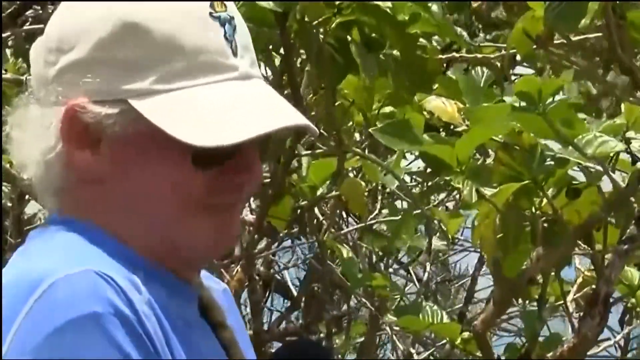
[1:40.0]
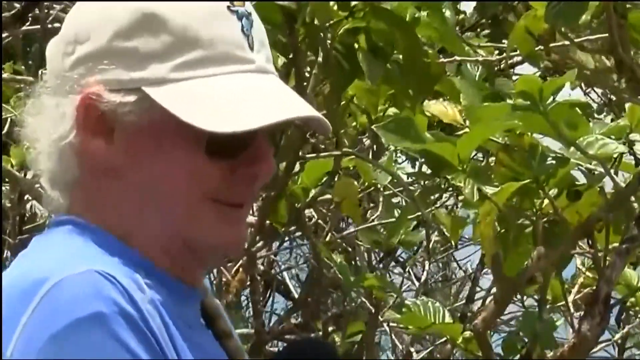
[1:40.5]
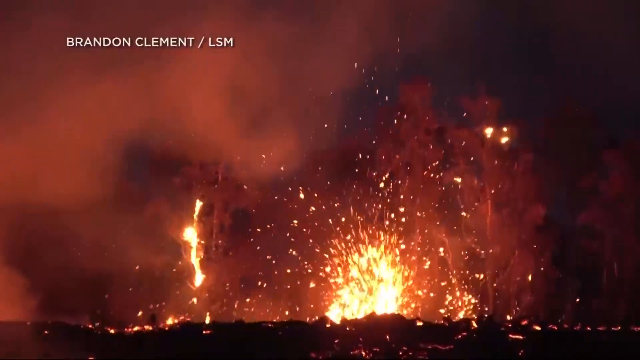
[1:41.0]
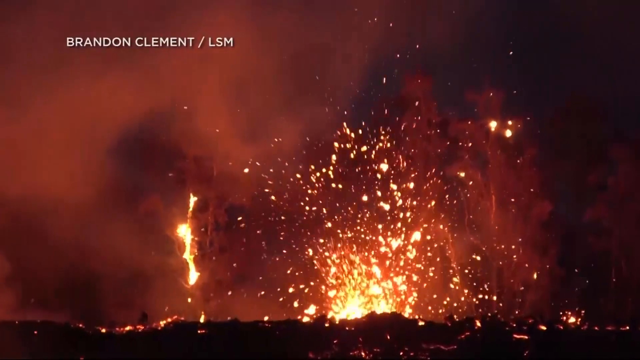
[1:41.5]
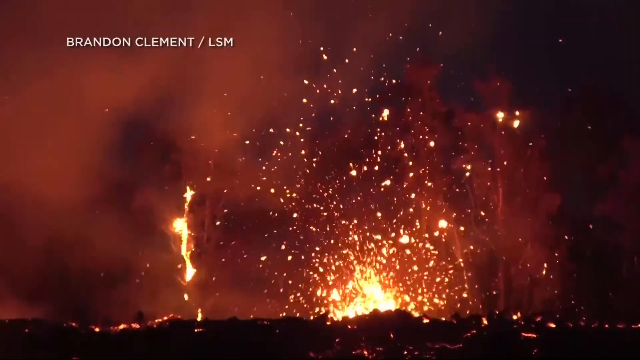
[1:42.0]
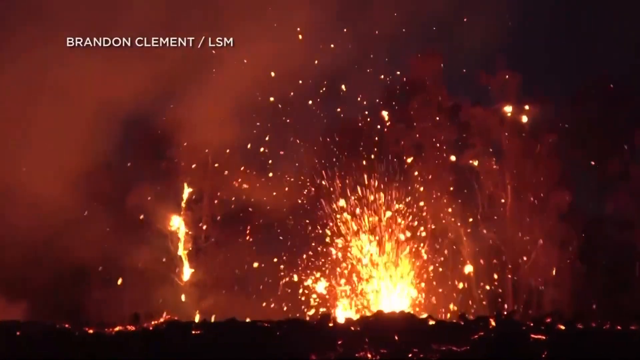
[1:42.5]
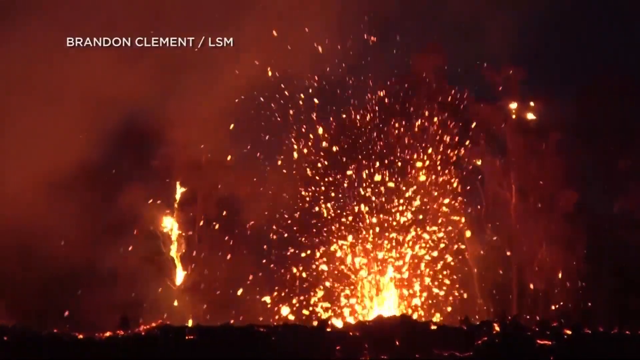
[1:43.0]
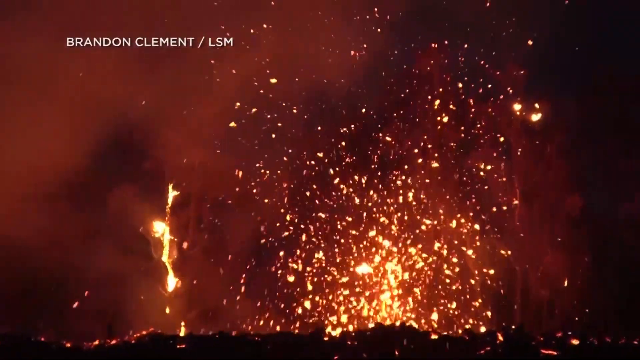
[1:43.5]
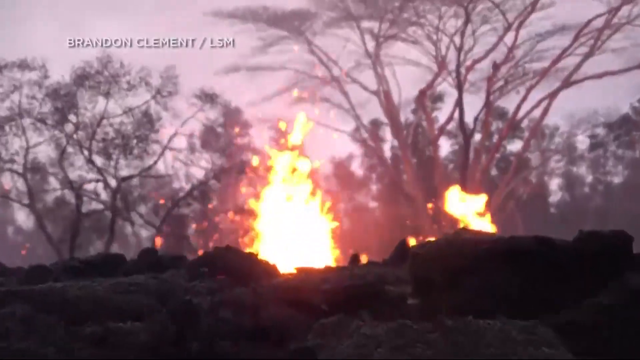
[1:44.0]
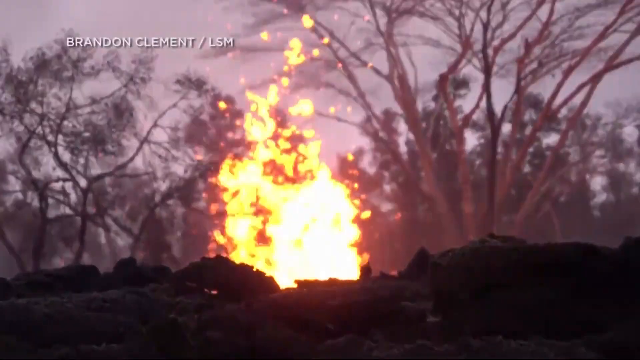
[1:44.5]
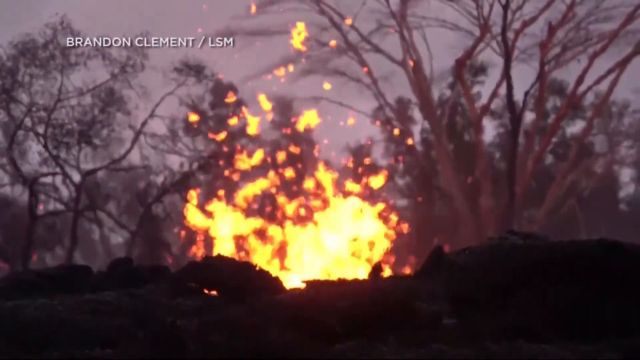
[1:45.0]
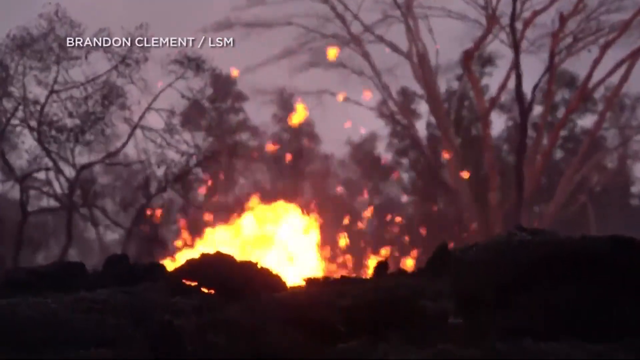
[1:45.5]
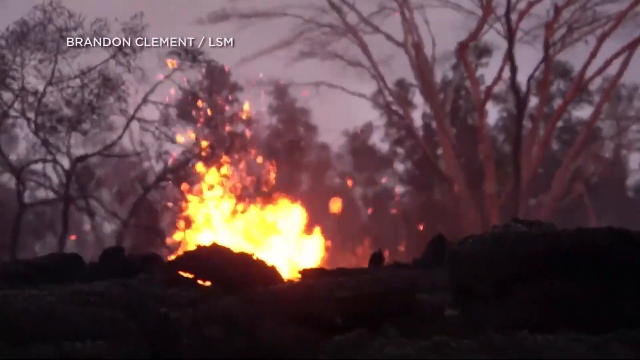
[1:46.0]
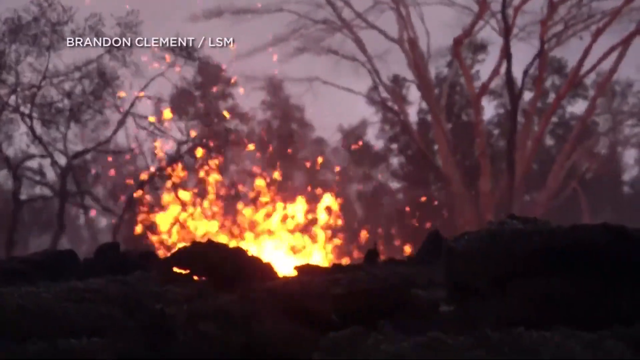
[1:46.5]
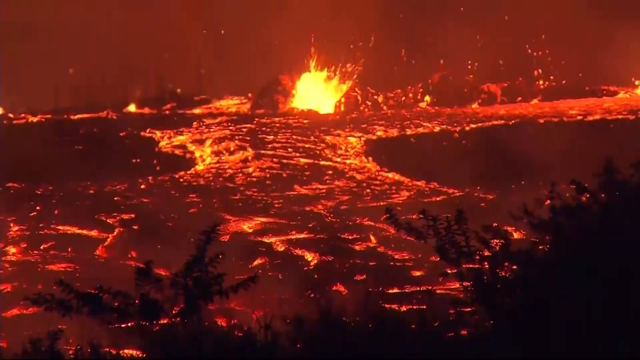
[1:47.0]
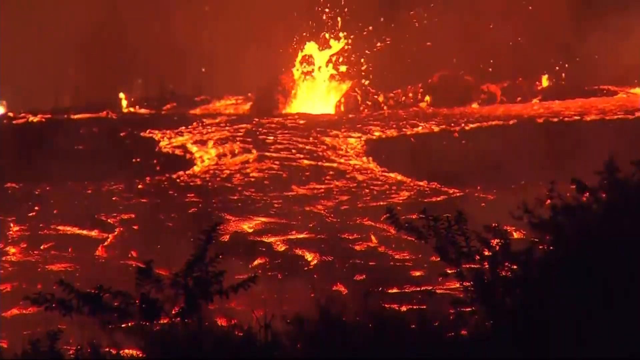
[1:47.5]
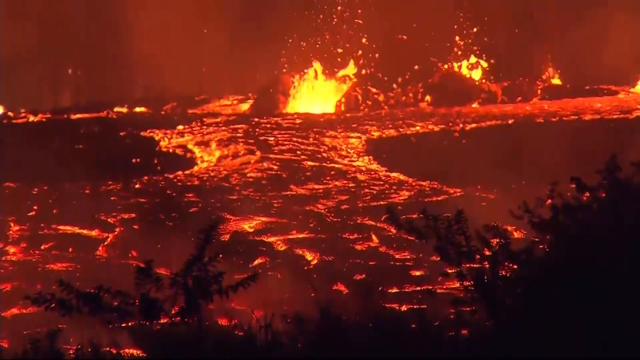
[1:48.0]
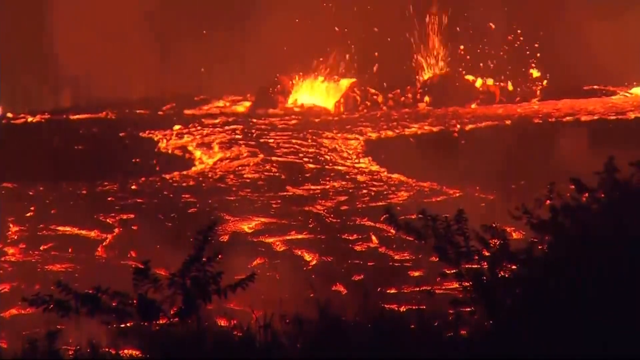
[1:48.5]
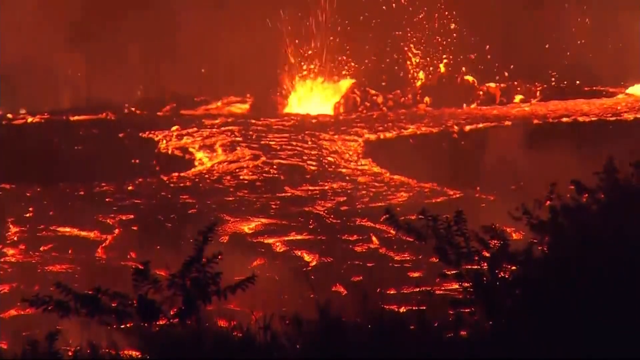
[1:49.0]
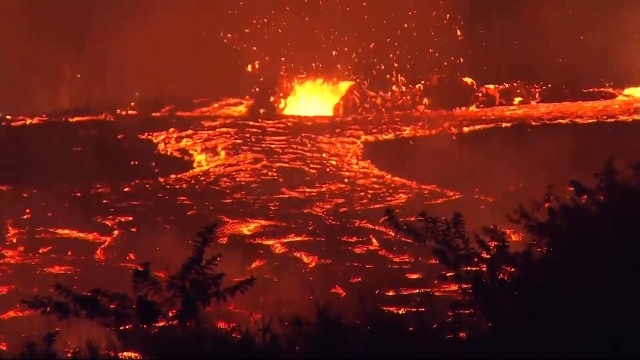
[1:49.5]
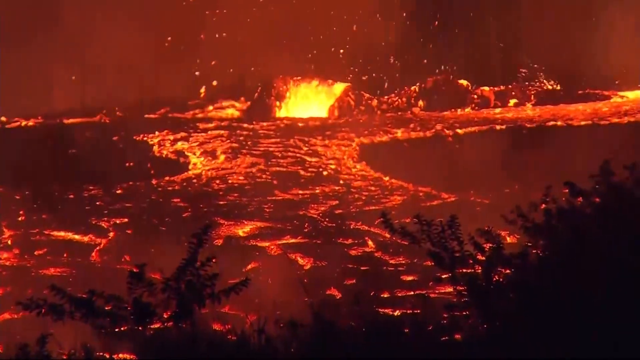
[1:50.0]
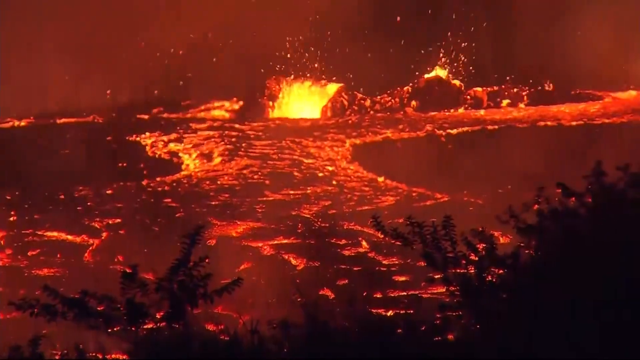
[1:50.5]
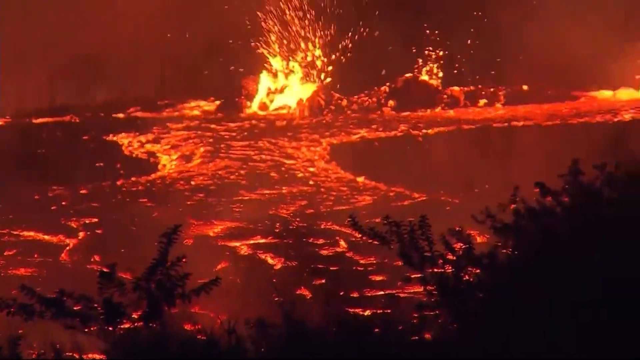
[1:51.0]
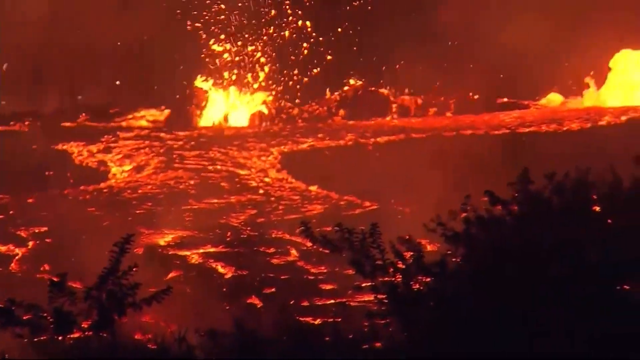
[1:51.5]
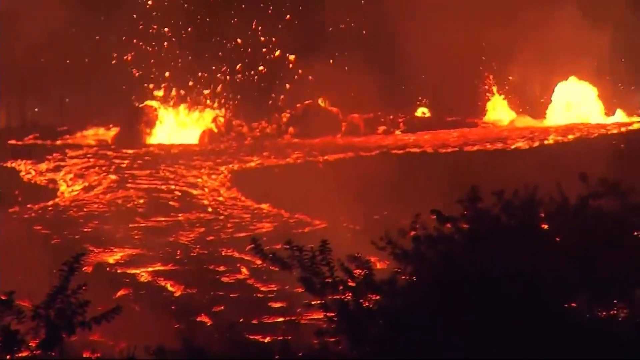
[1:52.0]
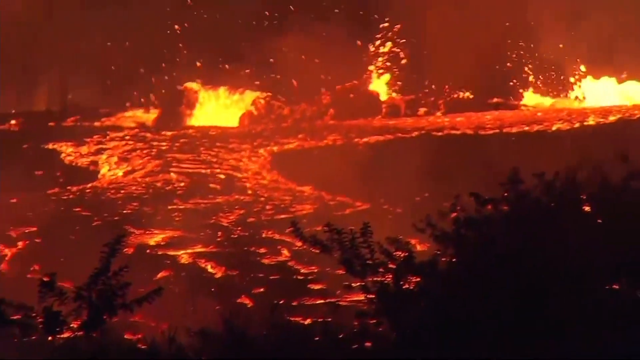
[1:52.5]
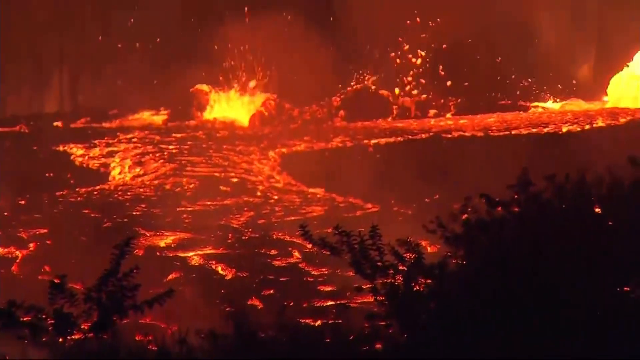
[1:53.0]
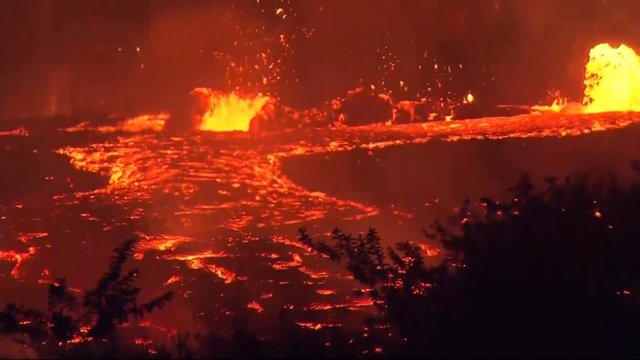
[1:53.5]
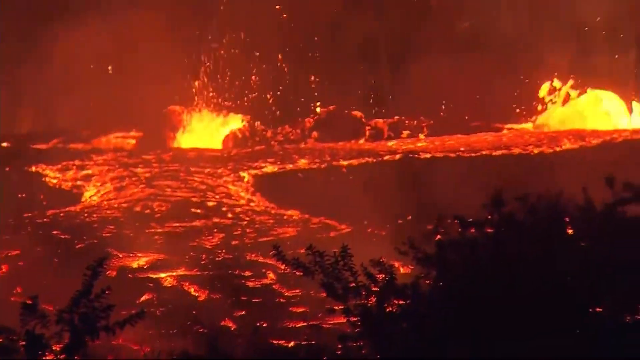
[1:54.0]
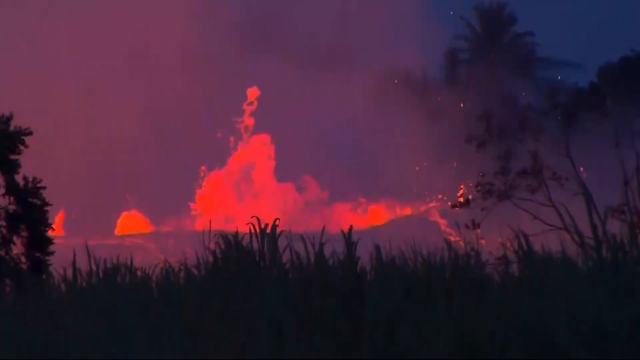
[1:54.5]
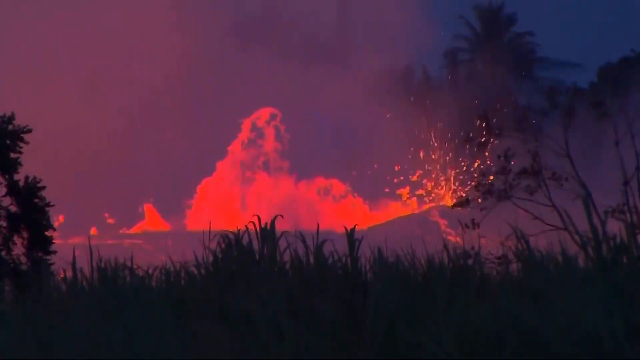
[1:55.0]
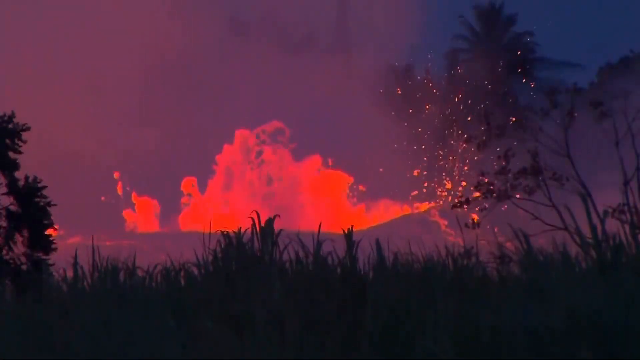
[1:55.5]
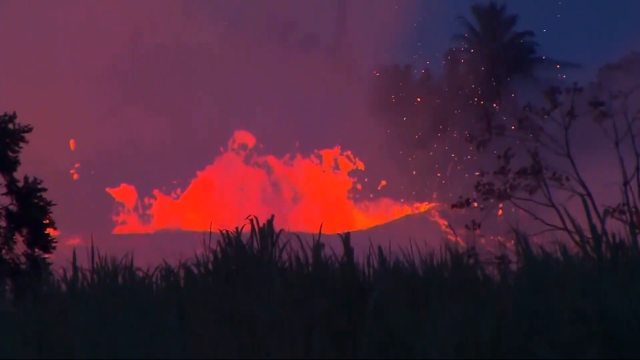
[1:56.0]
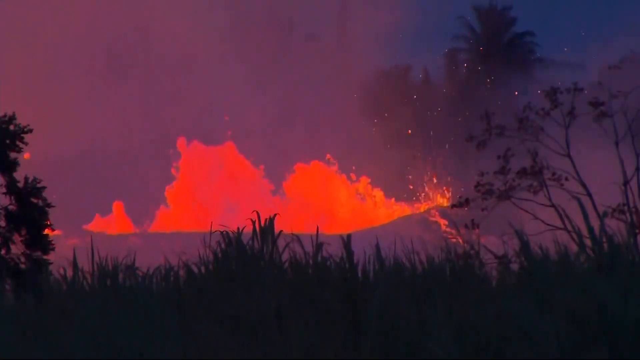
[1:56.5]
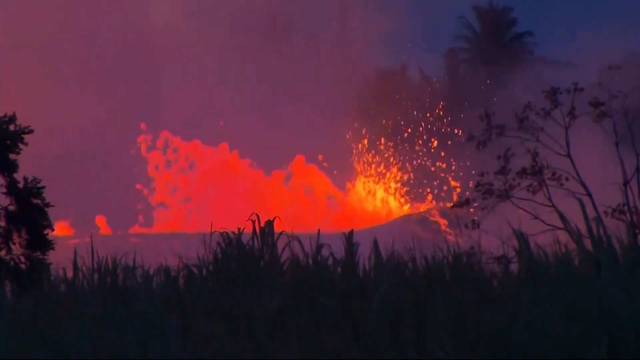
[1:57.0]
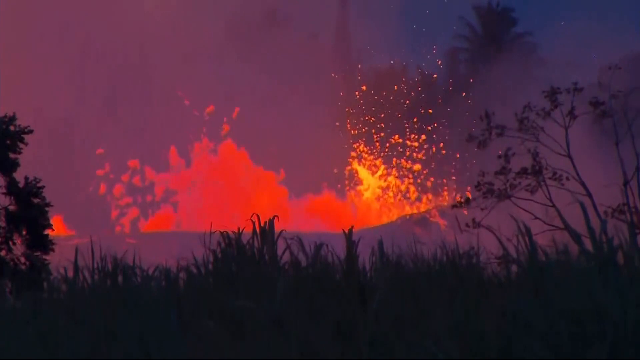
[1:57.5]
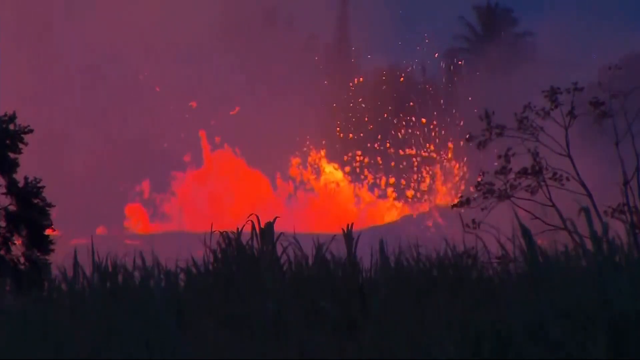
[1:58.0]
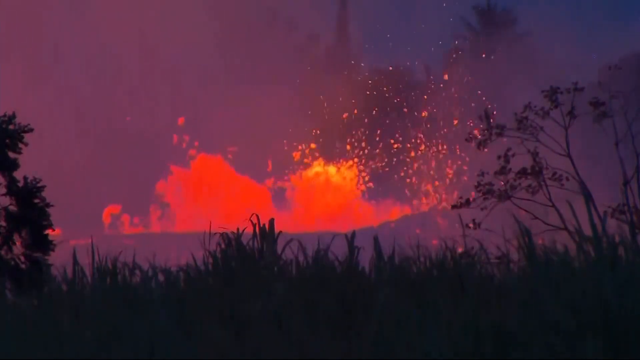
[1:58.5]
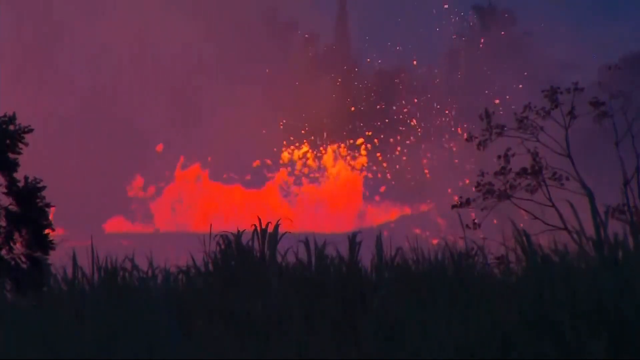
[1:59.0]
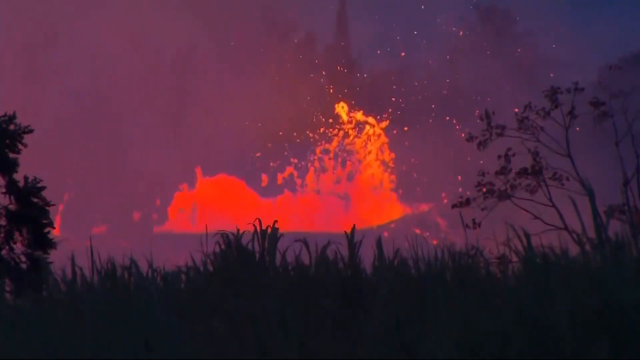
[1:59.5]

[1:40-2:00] An older gentleman appears on the left side of the screen wearing dark-tinted sunglasses and a white baseball cap with a logo that looks almost like a hospital sign, like the symbol with a snake wrapped around it, apparently white and blue. He has white hair and a light blue shirt, faces toward the right of the screen, and stands in front of a tree or bush with green leaves and branches, talking to somebody who does not appear on camera. It quickly cuts to very high-definition footage of a volcanic eruption, probably from a news agency, with text at the top left reading "Brandon Clement / LSM." The lava spews everywhere. It cuts to lower-quality footage where the camera zooms in, then to better-quality footage from very far away showing how much lava is everywhere; even the sky looks red, and the trees in the foreground look black. It then fades out to more footage of a bubbling eruption, with trees and smoke against the sky.